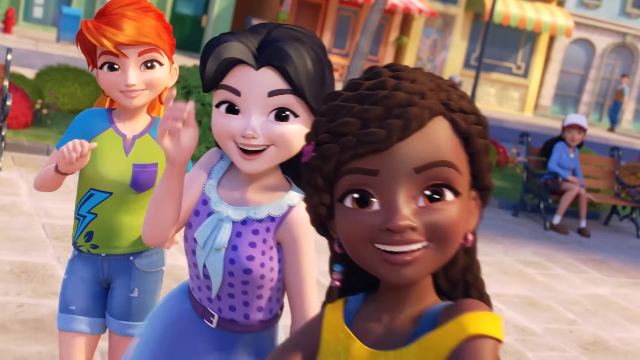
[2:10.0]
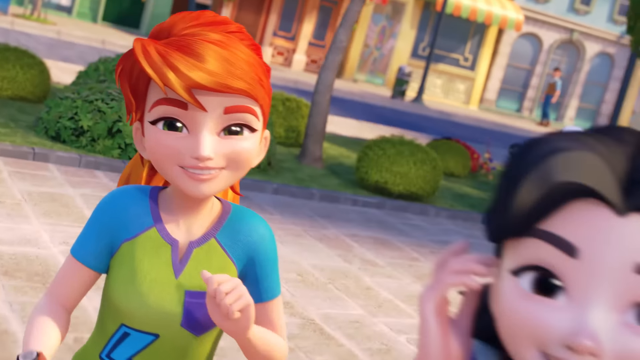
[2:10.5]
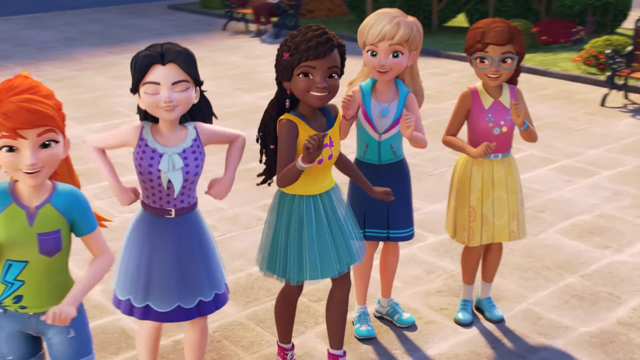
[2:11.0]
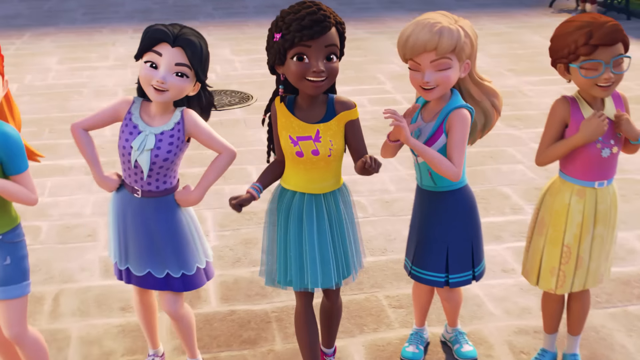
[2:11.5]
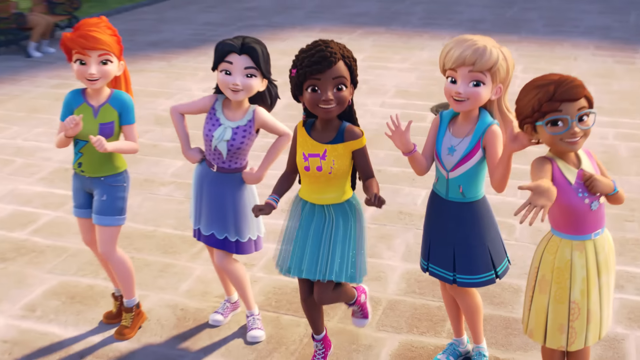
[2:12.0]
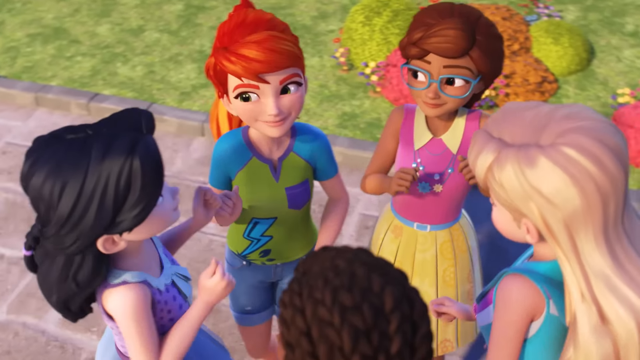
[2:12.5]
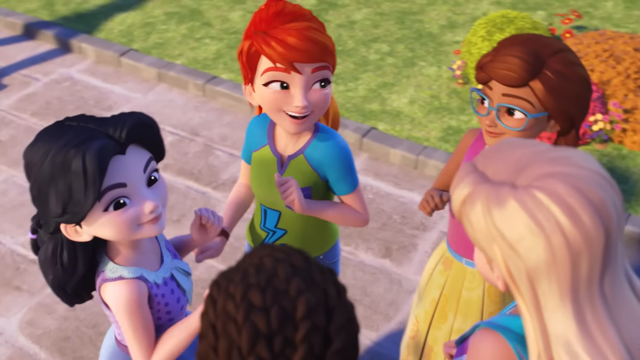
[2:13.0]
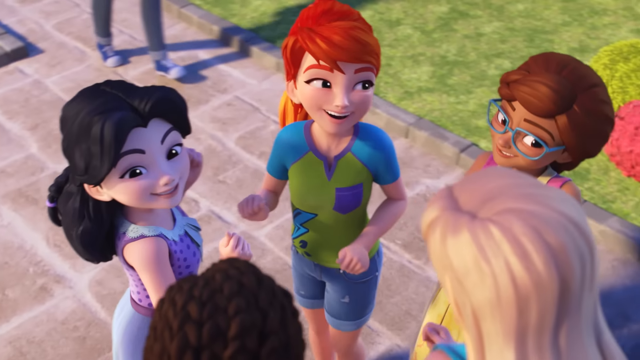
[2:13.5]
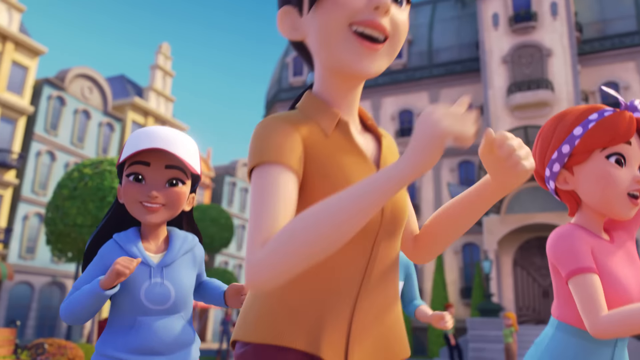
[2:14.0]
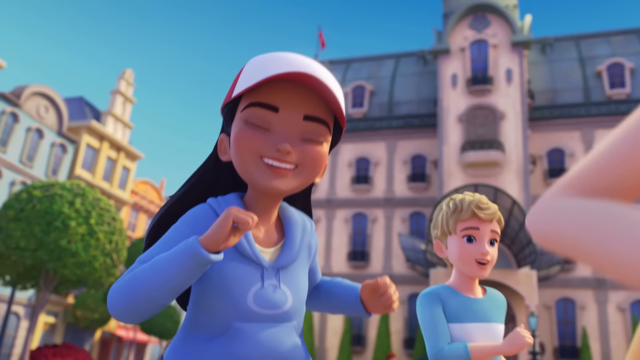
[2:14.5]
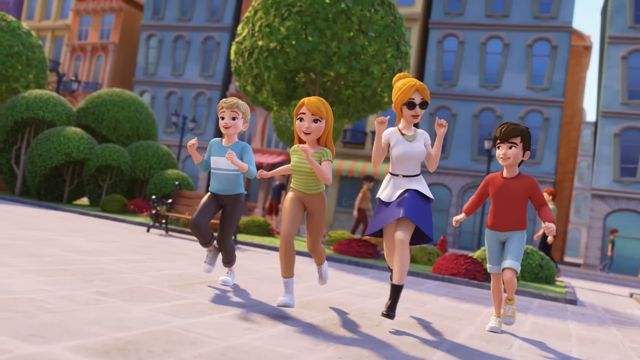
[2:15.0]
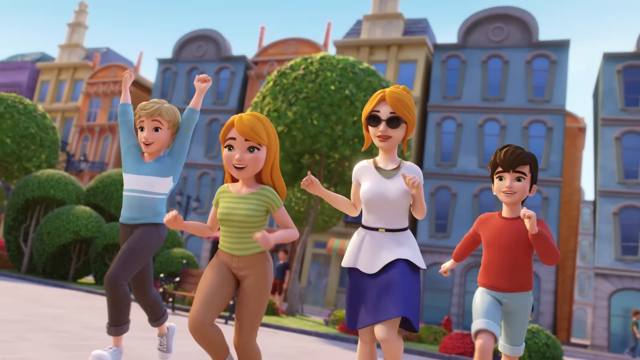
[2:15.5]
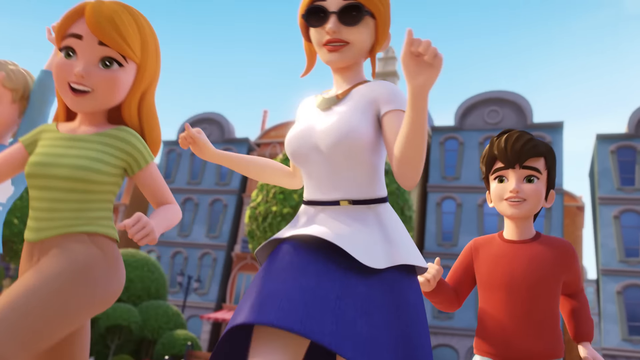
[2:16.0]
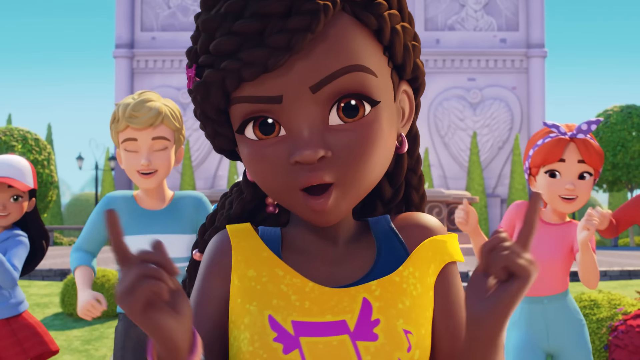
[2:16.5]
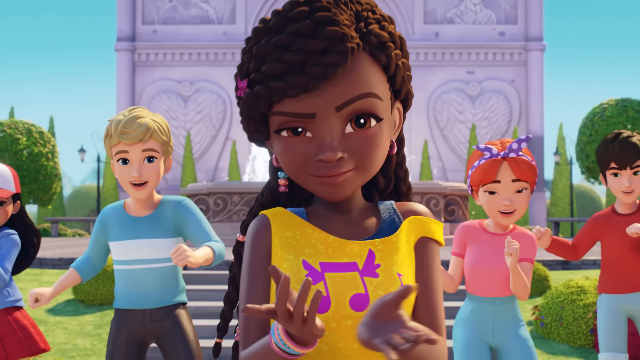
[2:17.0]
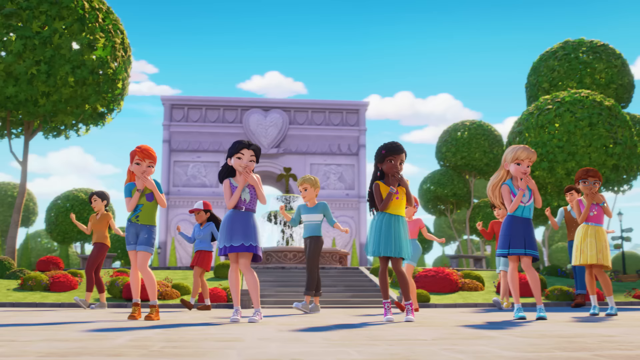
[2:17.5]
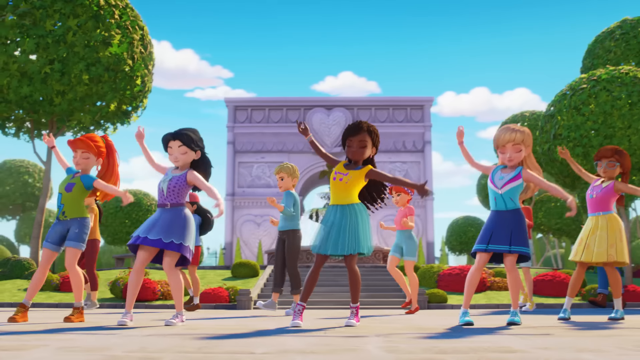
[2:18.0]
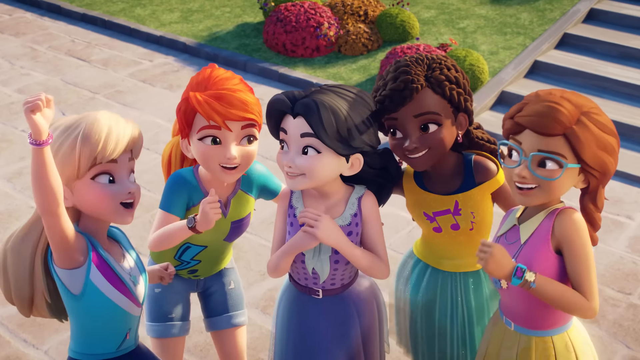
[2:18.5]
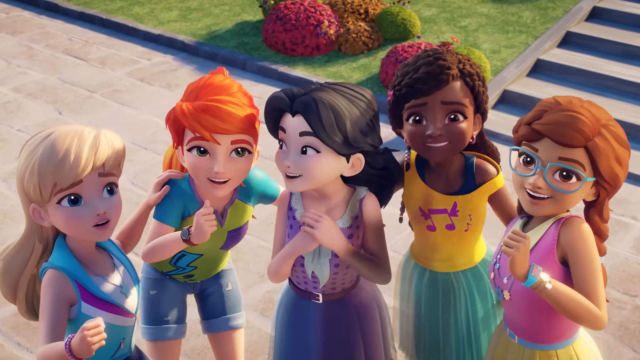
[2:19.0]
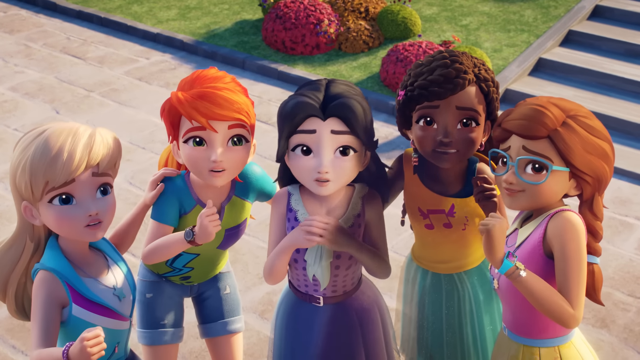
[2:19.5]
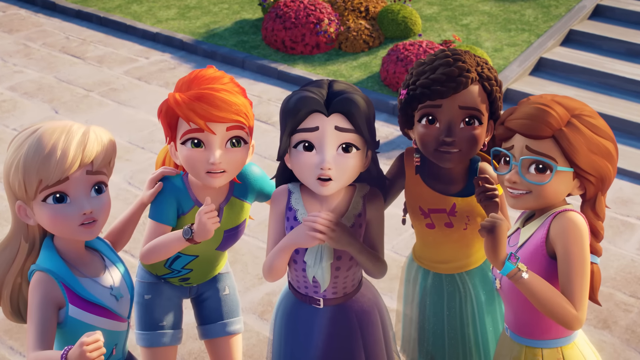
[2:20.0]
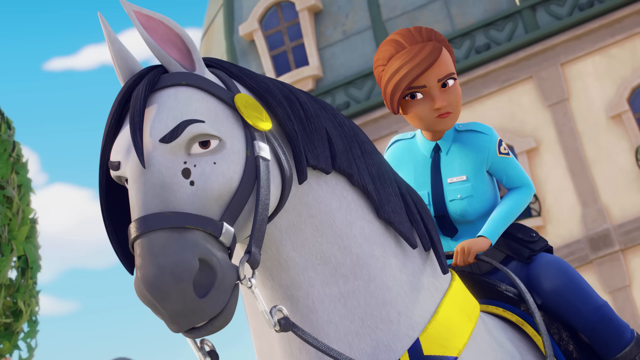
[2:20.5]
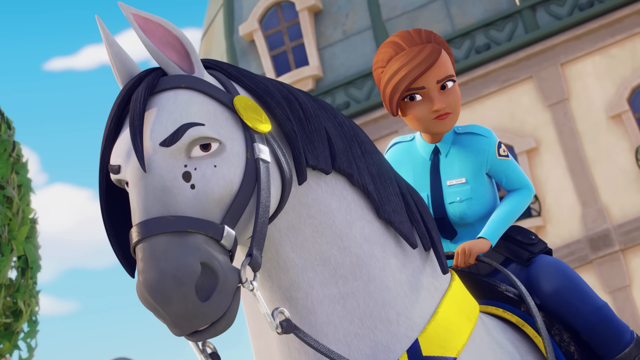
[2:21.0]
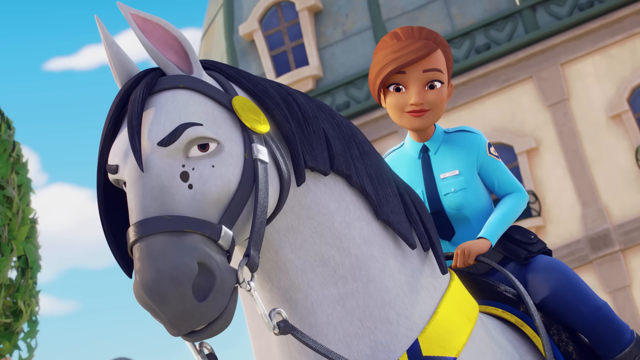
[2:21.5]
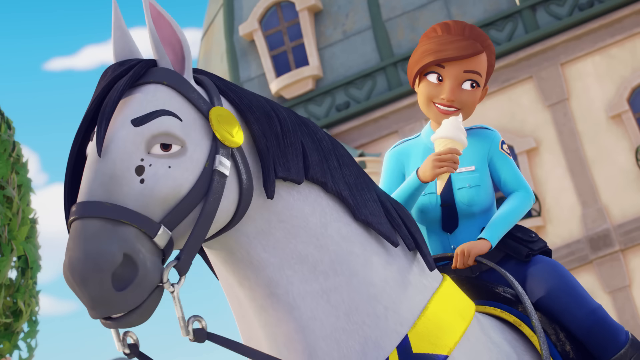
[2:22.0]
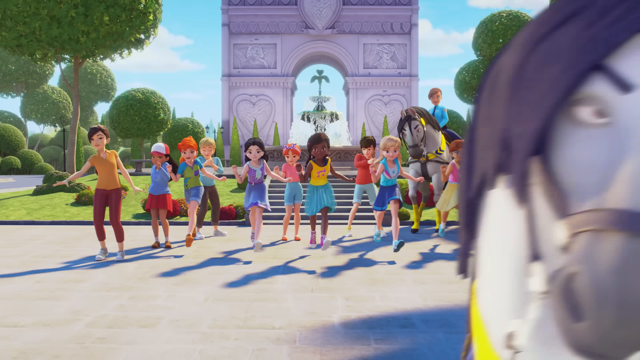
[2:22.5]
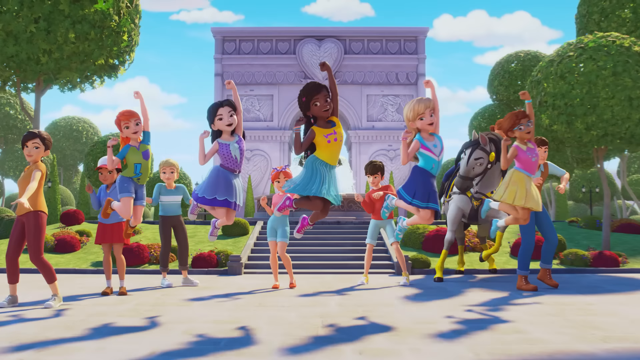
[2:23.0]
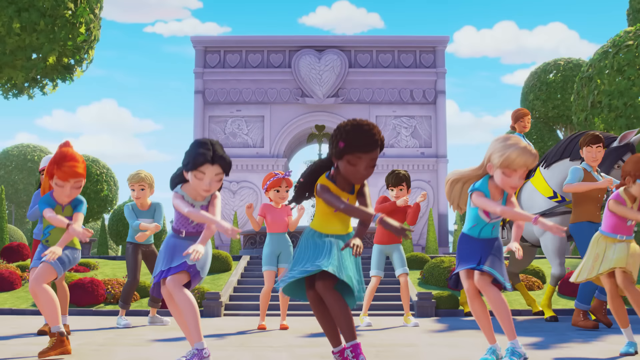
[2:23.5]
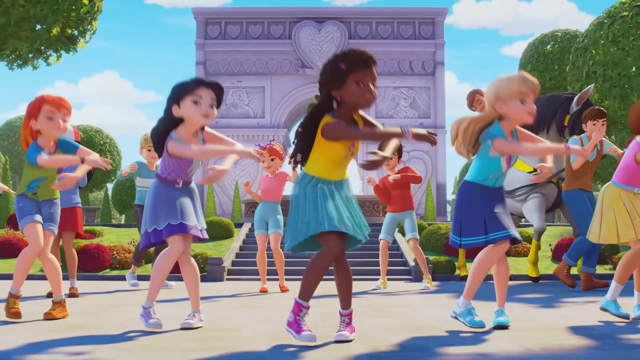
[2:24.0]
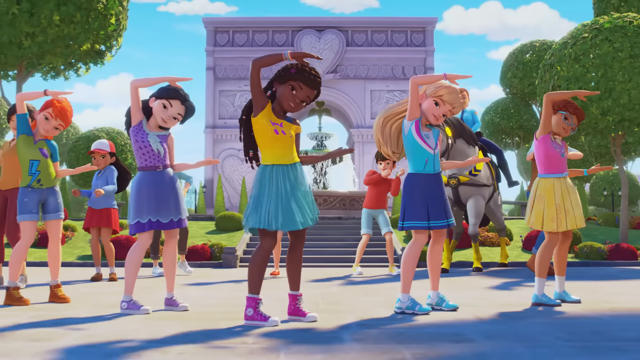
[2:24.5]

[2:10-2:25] The five friends are together, dancing happily. The townspeople join in, and everybody in the town square is dancing and singing. A cop arrives on a horse and joins the fun, dancing with the horse. The town square has a structure with hearts on it in the back.